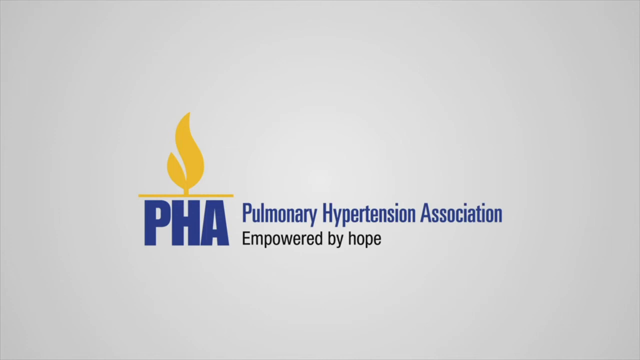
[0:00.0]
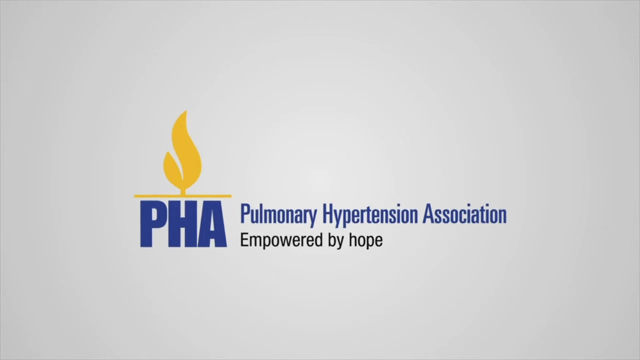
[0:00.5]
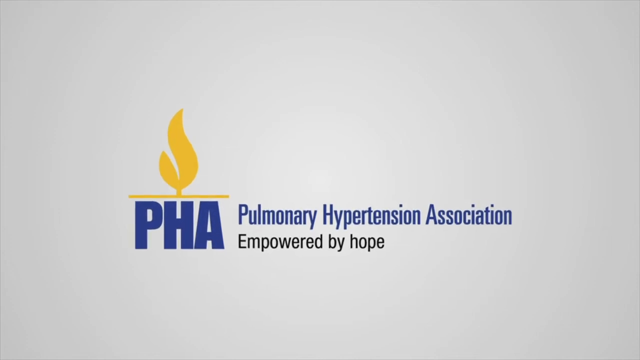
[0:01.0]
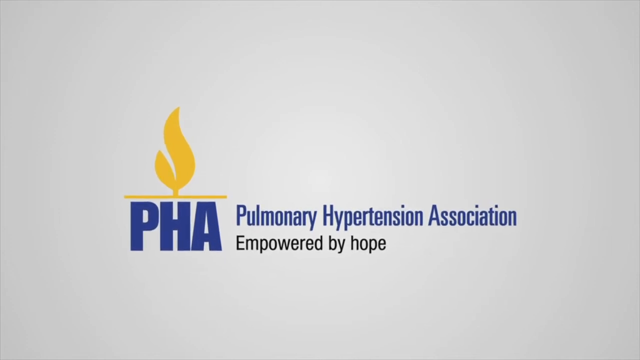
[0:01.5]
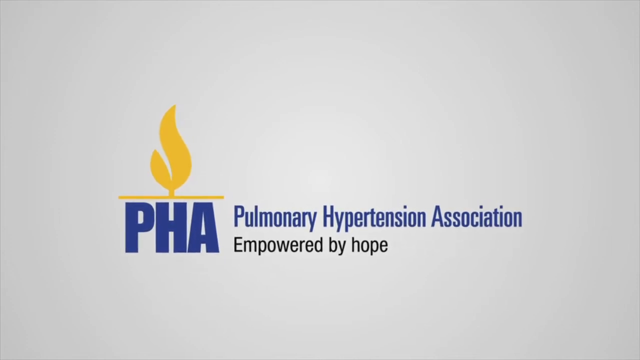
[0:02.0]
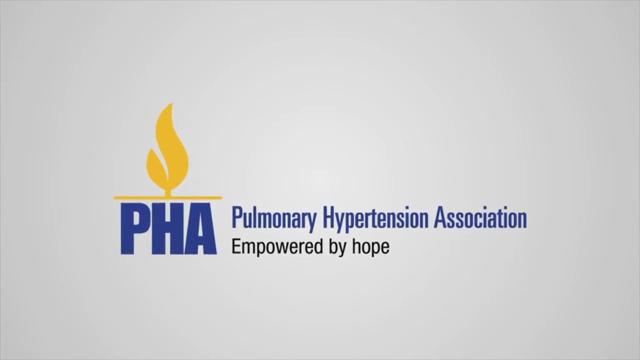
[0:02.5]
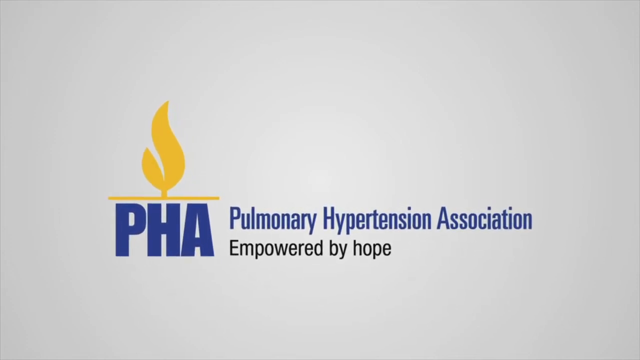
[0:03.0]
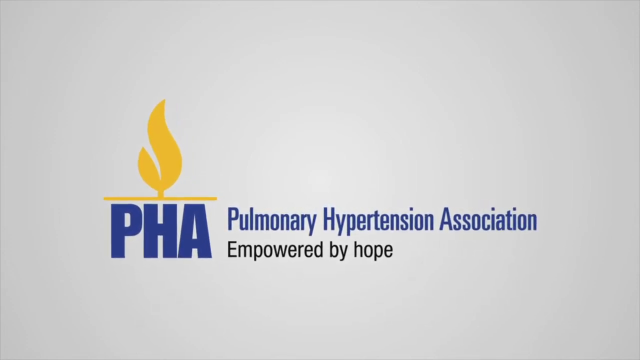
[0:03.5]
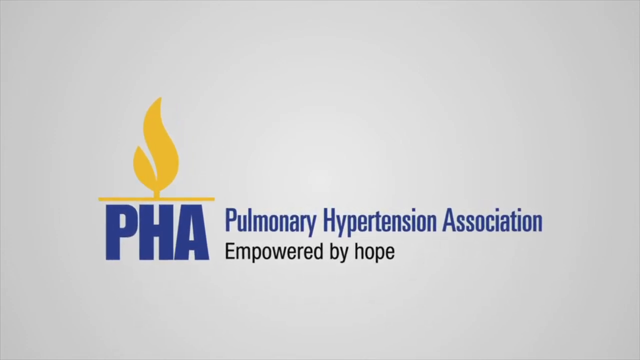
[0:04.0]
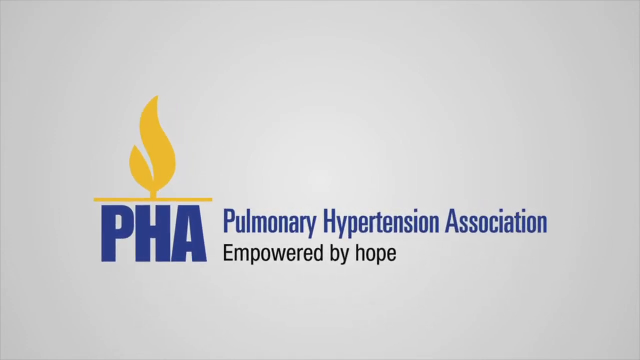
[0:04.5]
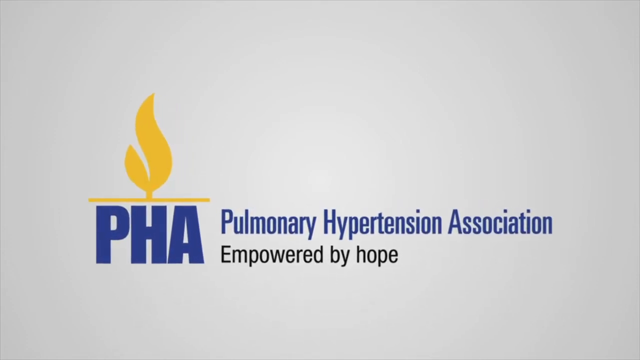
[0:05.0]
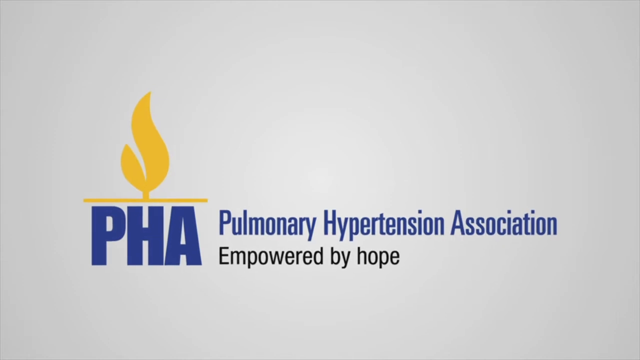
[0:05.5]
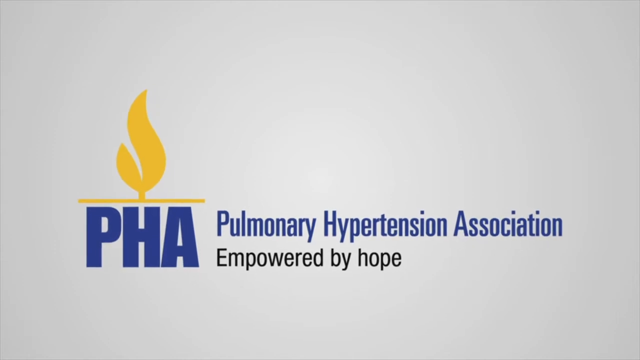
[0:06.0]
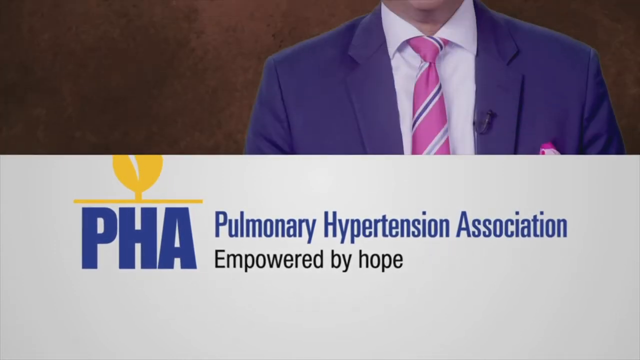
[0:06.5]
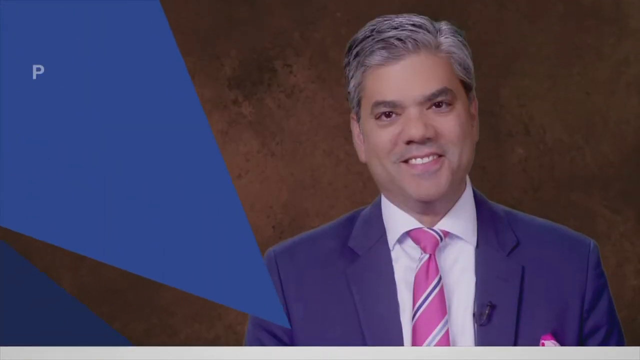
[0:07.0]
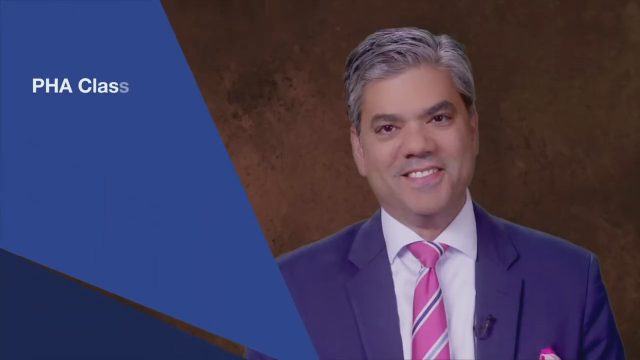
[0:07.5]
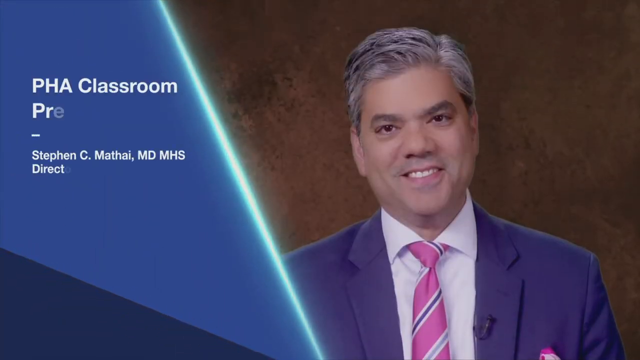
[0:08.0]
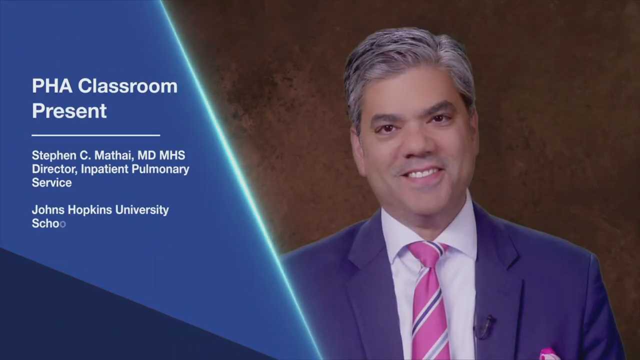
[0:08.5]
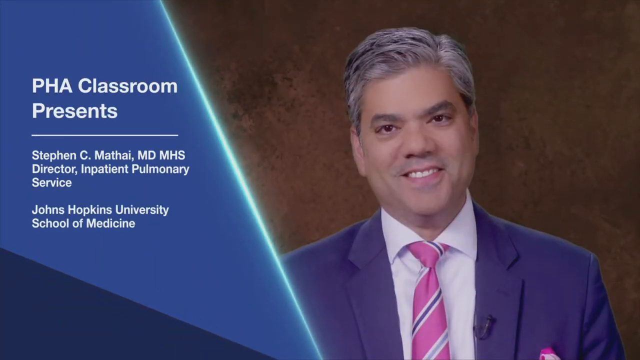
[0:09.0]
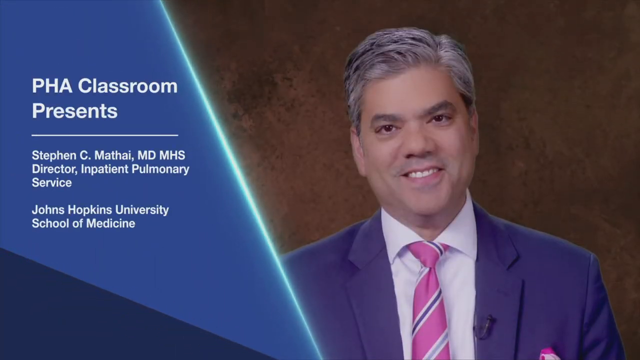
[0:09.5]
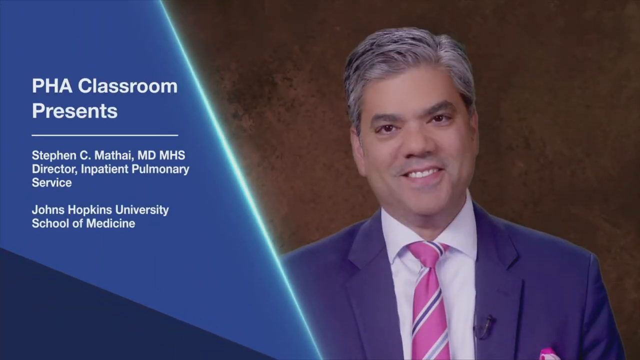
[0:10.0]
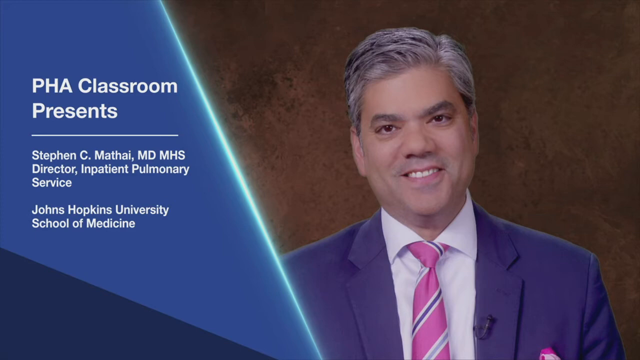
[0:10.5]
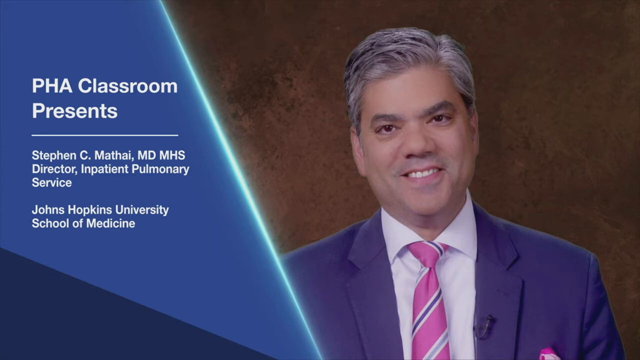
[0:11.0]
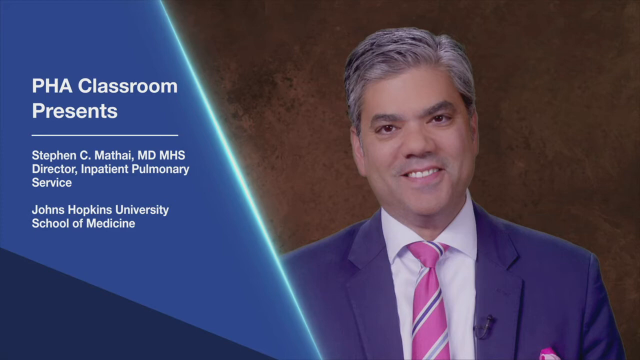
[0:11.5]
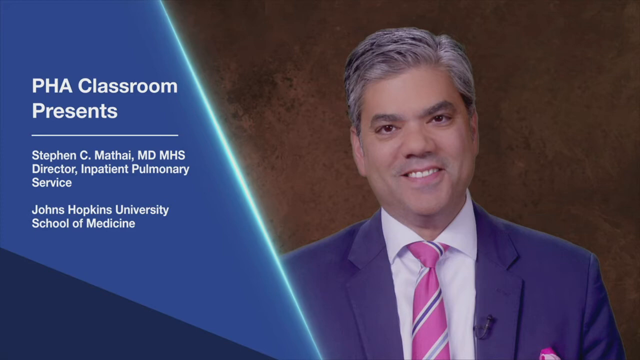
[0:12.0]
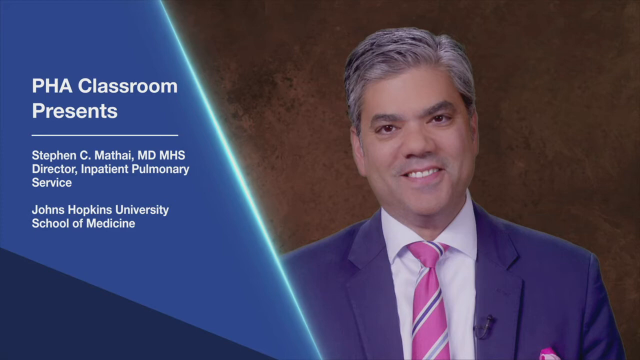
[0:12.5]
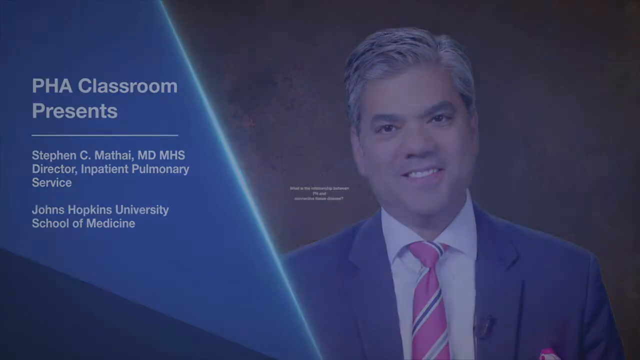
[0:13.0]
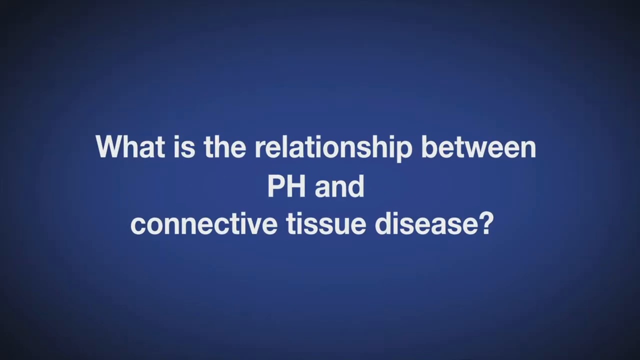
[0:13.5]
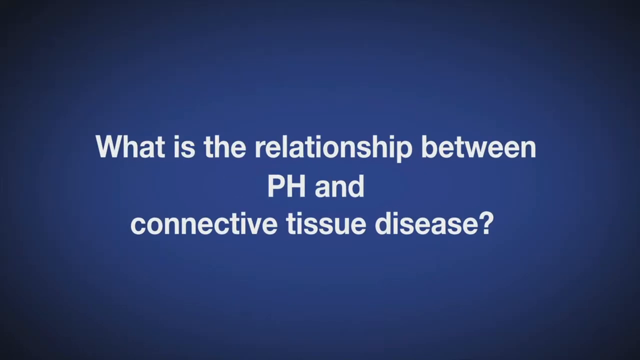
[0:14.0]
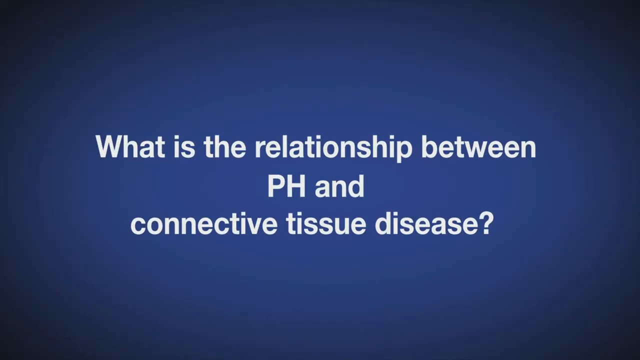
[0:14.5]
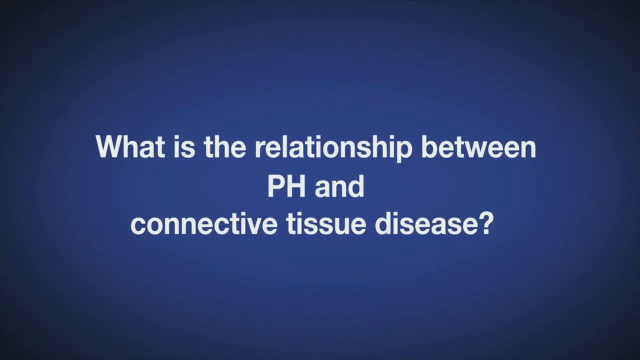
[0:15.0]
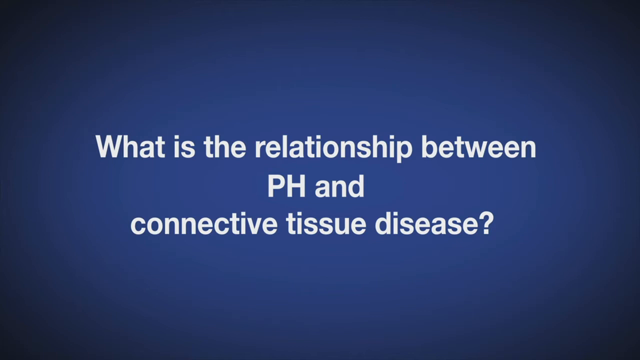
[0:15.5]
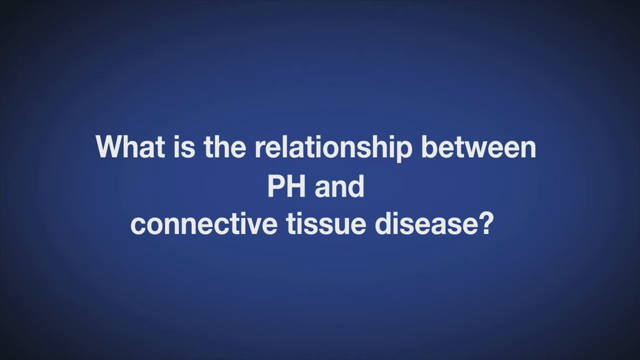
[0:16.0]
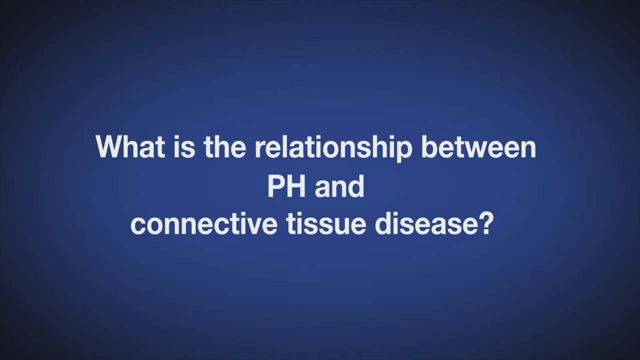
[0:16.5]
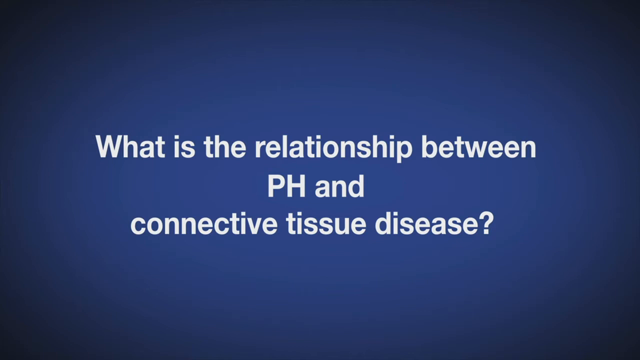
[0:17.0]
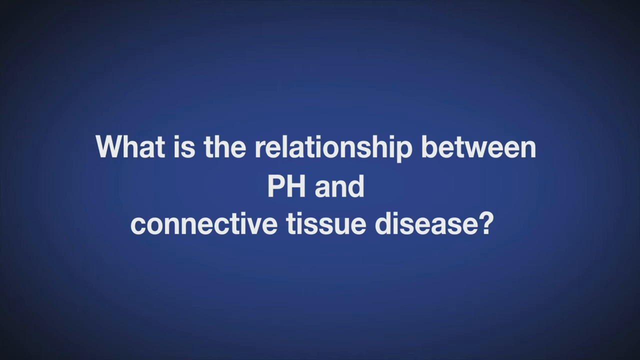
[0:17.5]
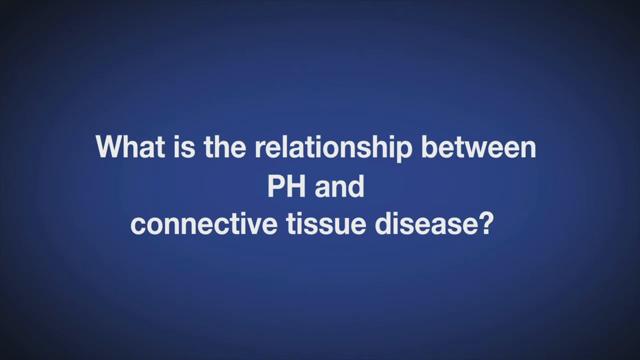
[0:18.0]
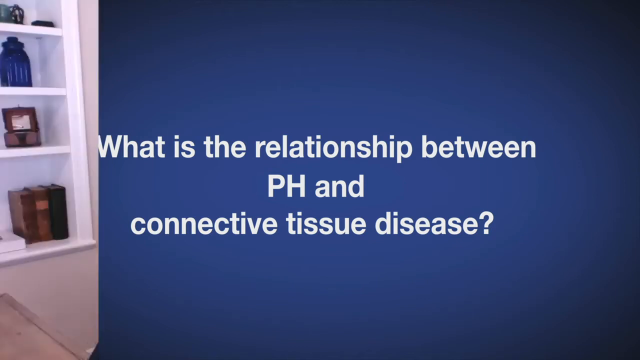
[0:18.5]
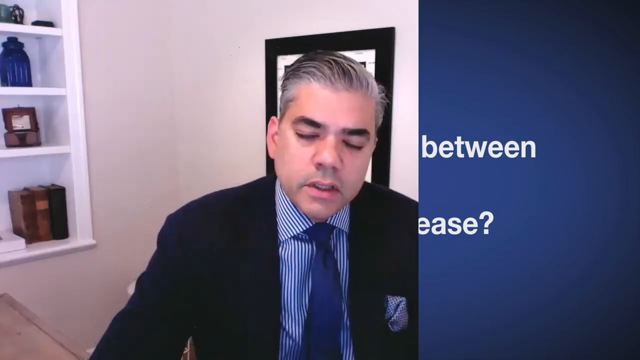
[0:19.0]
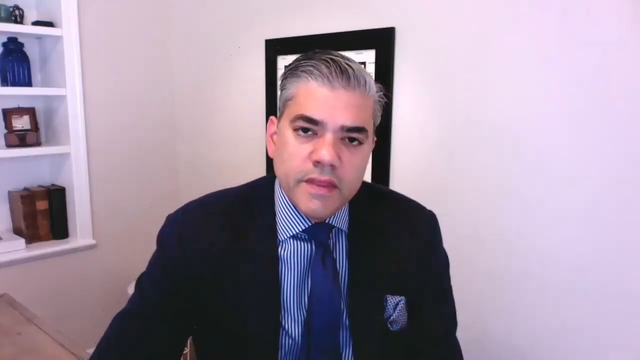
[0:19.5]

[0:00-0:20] A blue background carries blue and black writing. In blue is a logo reading "PHA" with a yellow-gold symbol above it, and next to it, also in blue, "Pulmonary Hypertension Association". Just below in black is "Empowered by Hope". This introduction slide slowly gets bigger on the screen. The next scene has a picture of a man on the right-hand side: he has gray hair and wears a pink tie, a blue suit and a white shirt. On the left-hand side is the heading "PHA classroom presents" followed by the name and title "Stephen C Mathai MD MHS director inpatient pulmonary service. John Hopkins University School of Medicine". The video then transitions to a screen with a blue background that reads "what is the relationship between PH and connective tissue disease", which pauses on the screen. A transition effect scrolls from left to right to reveal the man pictured before, Dr. Stephen, wearing a blue suit, a blue and white striped shirt and a blue tie. He is in some sort of study or lounge with a white background, and on the left-hand side is a shelf with some items on it.